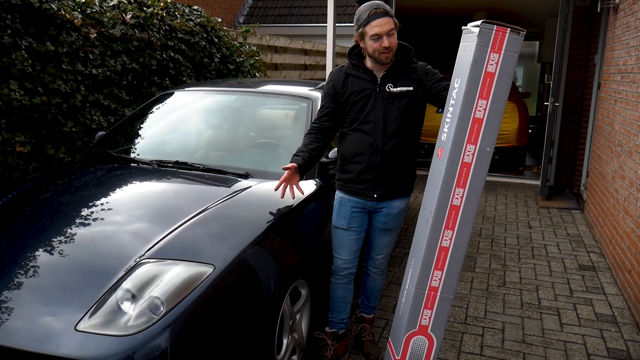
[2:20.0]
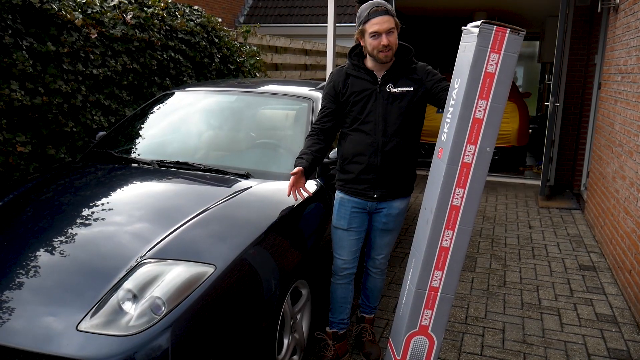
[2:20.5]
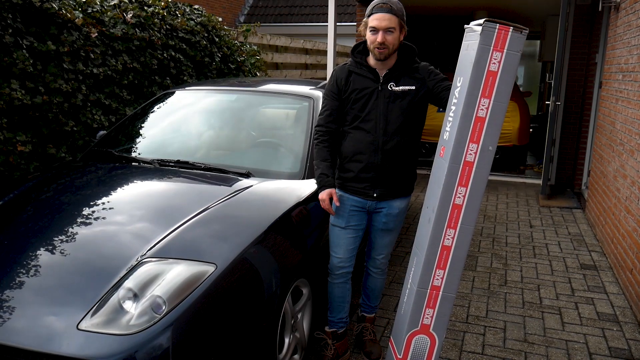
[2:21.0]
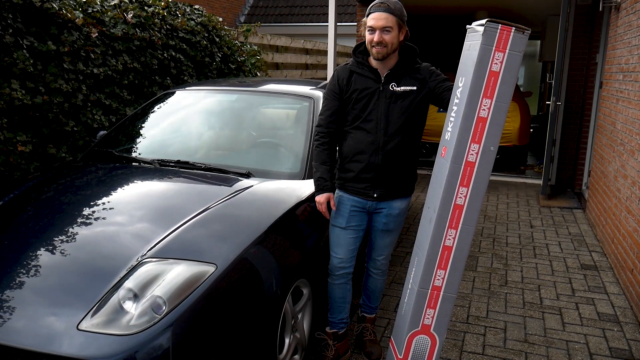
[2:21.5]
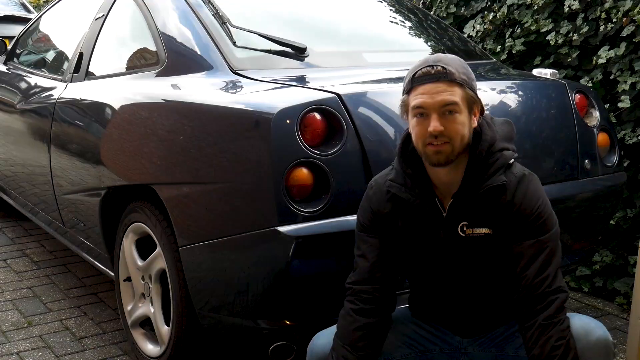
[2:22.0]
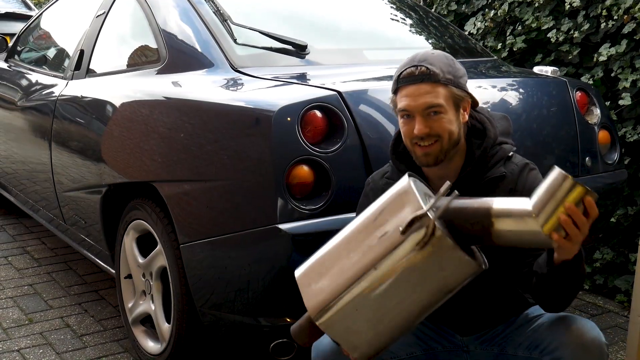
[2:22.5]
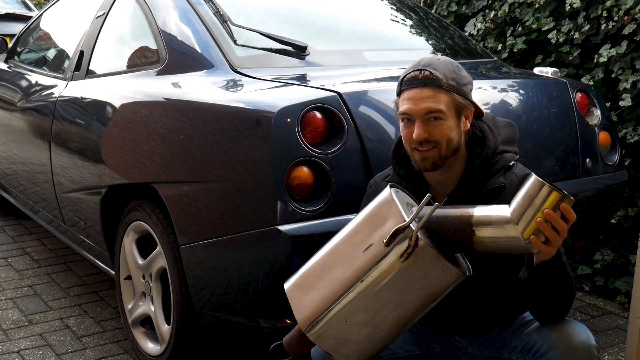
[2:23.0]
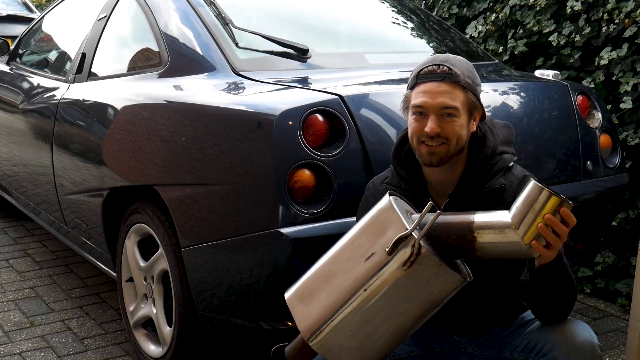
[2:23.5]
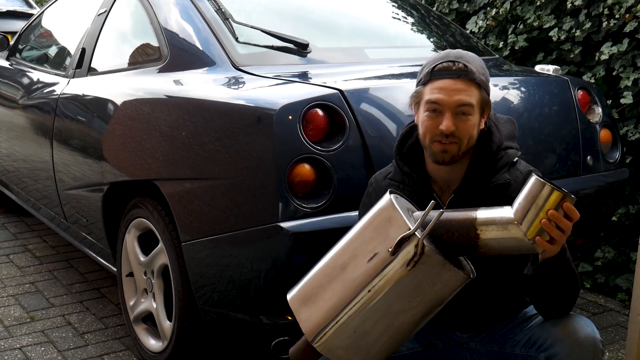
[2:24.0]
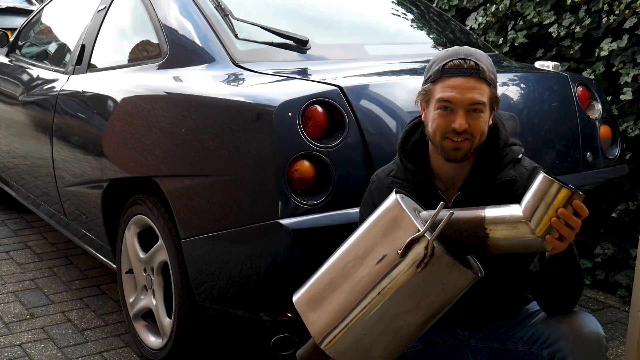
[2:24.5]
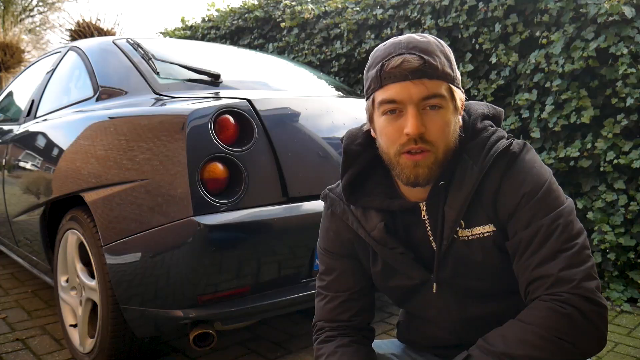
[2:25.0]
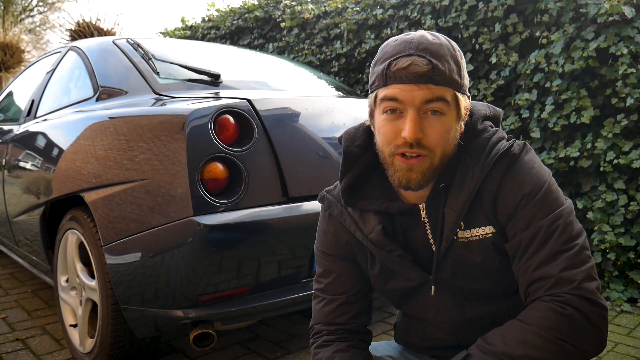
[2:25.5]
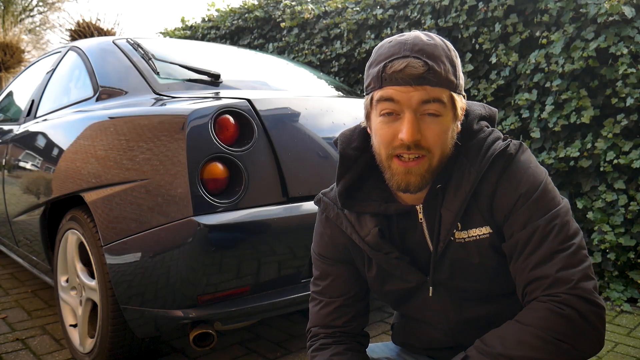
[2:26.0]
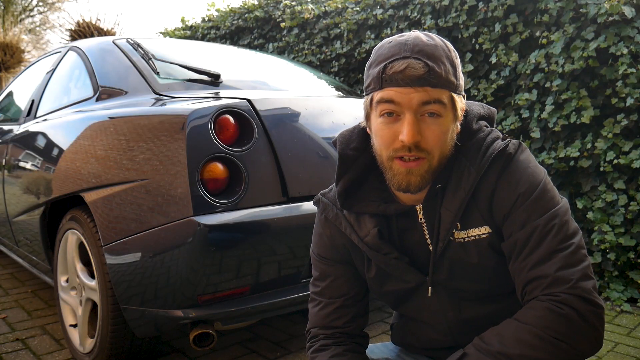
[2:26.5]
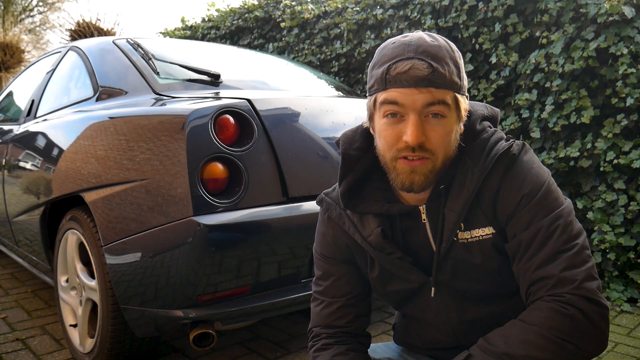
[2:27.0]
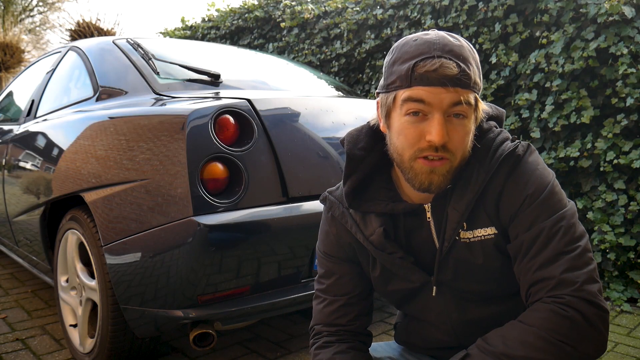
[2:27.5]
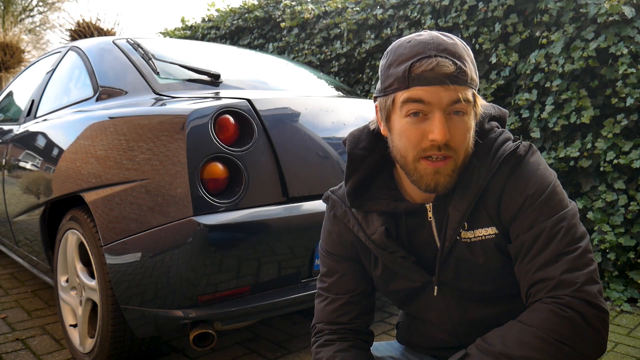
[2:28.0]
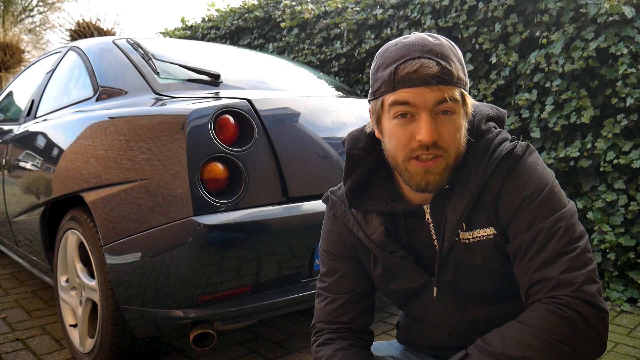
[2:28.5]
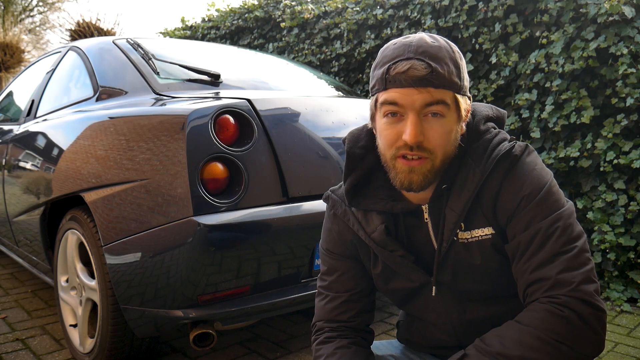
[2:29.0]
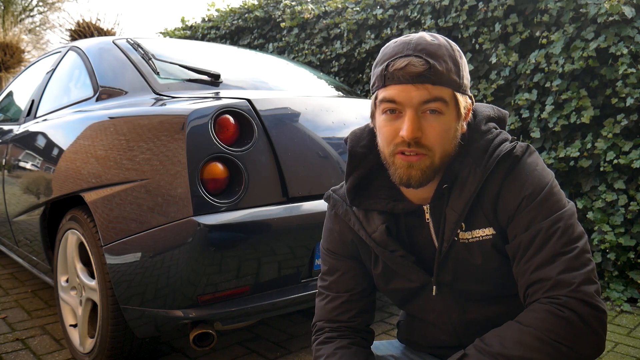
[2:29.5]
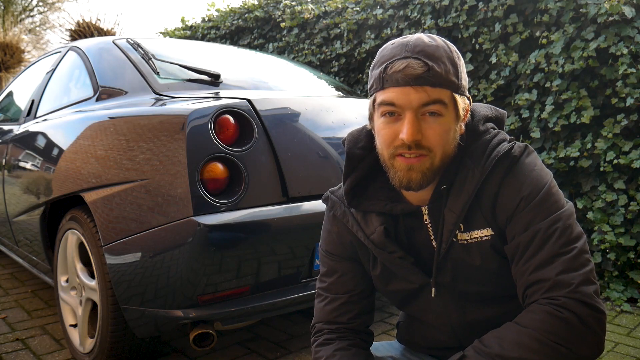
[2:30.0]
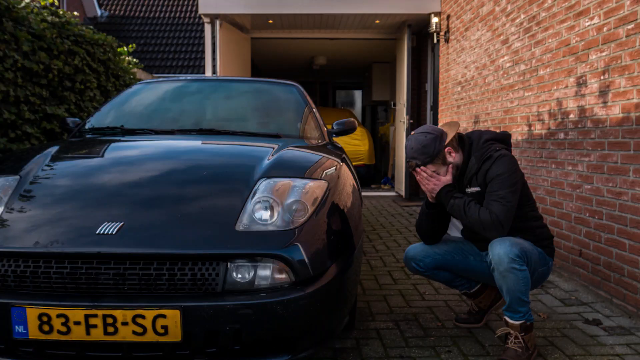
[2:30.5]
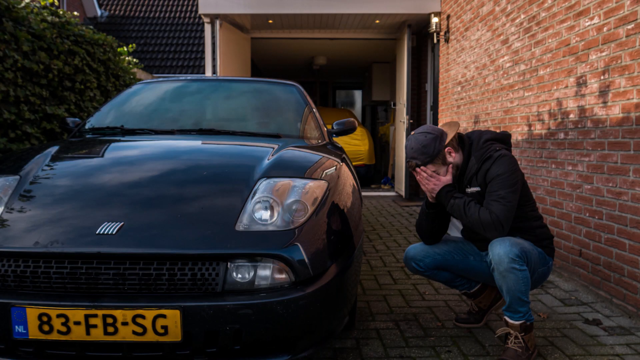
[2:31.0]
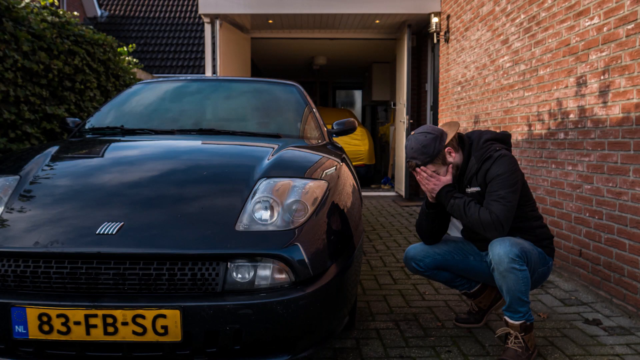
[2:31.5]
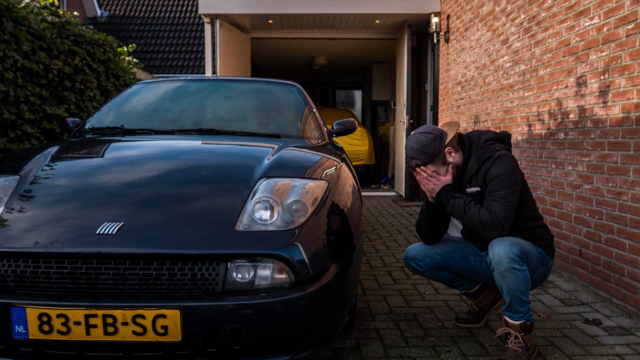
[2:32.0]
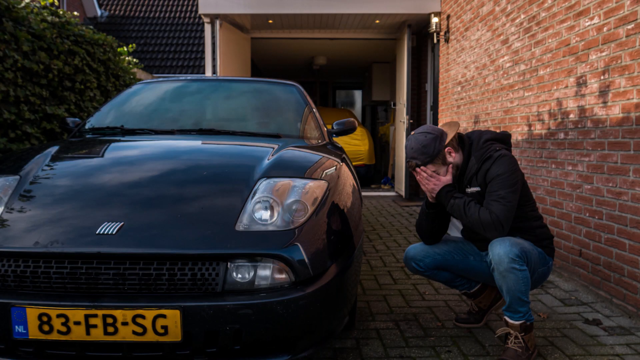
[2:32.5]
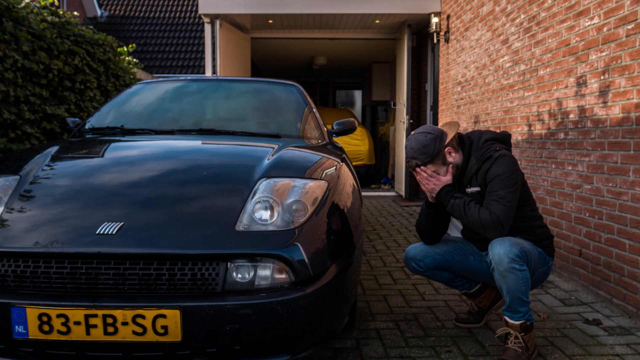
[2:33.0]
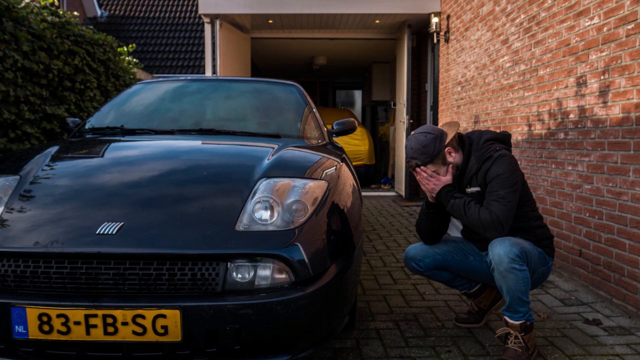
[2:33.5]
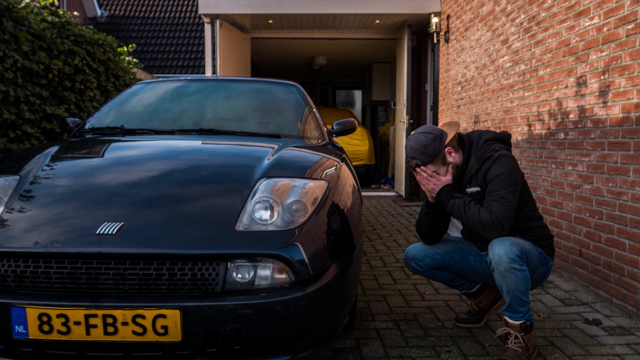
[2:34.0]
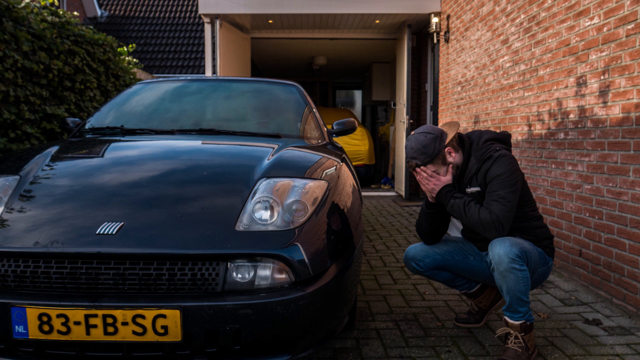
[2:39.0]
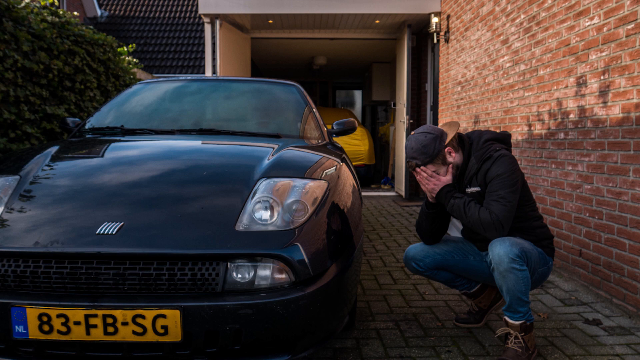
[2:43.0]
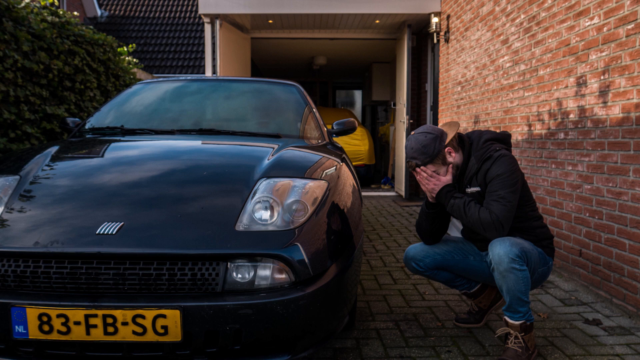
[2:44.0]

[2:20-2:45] He stands next to the car with a gray box that is probably as big as he is, with red tape going up the side. His jeans are tight, and what looks like the outline of his phone is visible in them. He holds the box in one hand and talks. Then he is at the rear of the car, apparently holding an exhaust pipe next to it, with the pipe part in one hand and his other hand out of view, and he is squatting behind the car. The camera switches, and he is still behind the car but not holding anything, wearing a backwards hat. Then it switches to a view of him squatting with his elbows resting on his knees, his head in his hands, looking dejected.